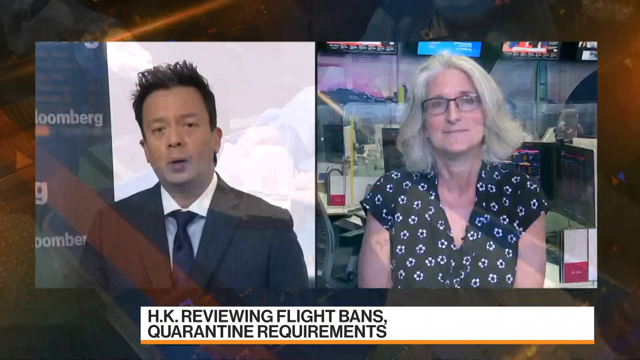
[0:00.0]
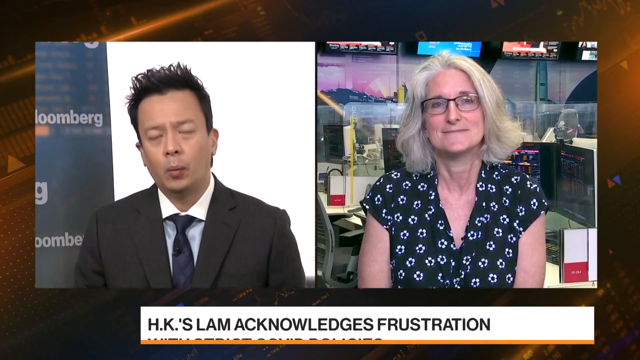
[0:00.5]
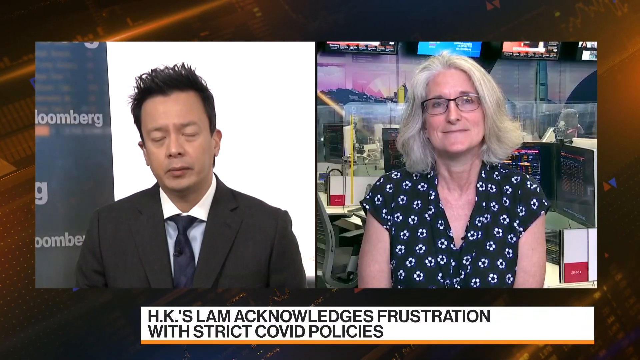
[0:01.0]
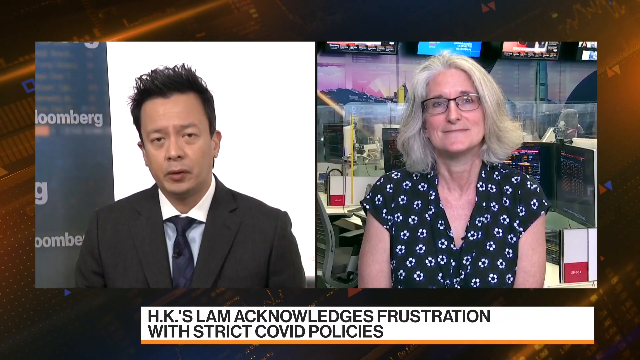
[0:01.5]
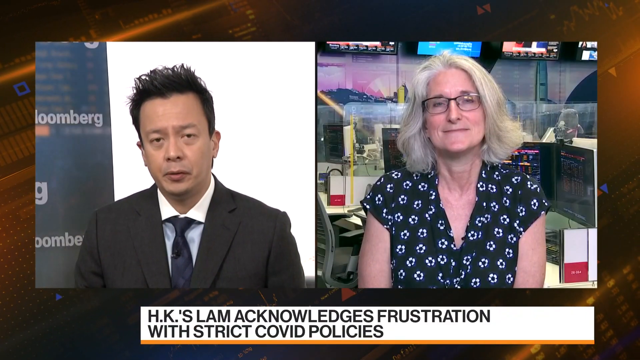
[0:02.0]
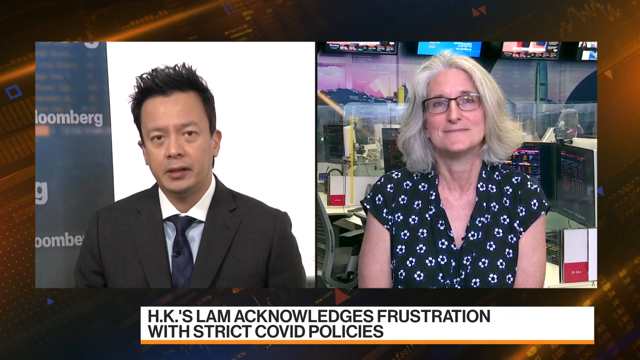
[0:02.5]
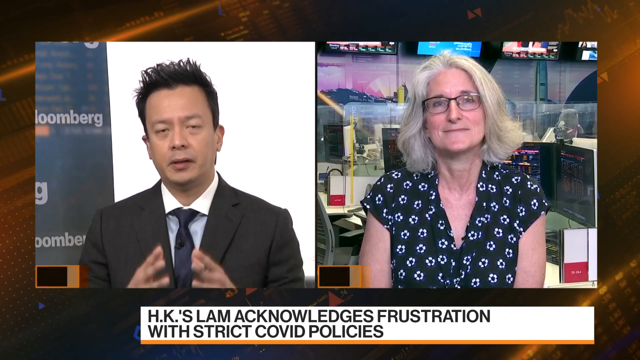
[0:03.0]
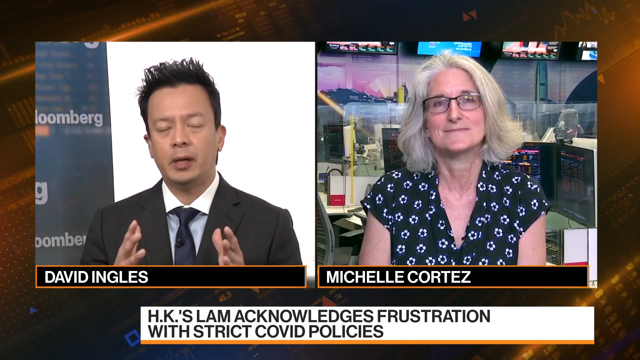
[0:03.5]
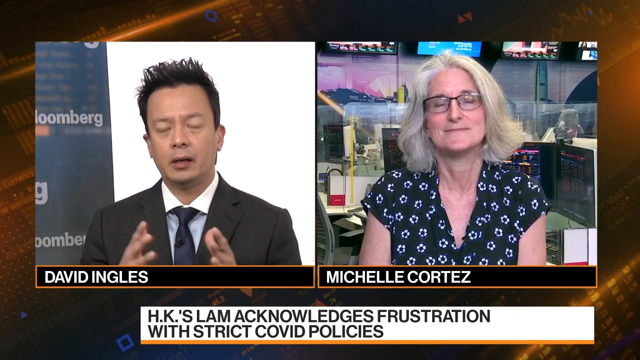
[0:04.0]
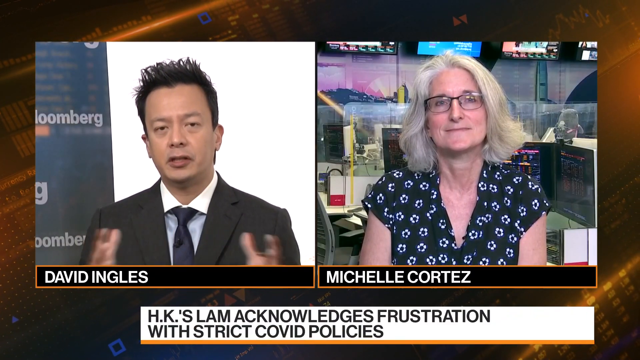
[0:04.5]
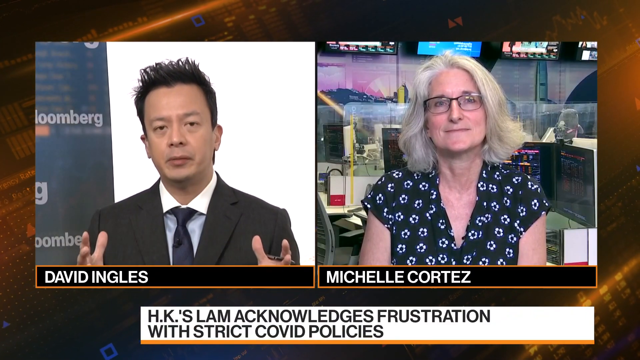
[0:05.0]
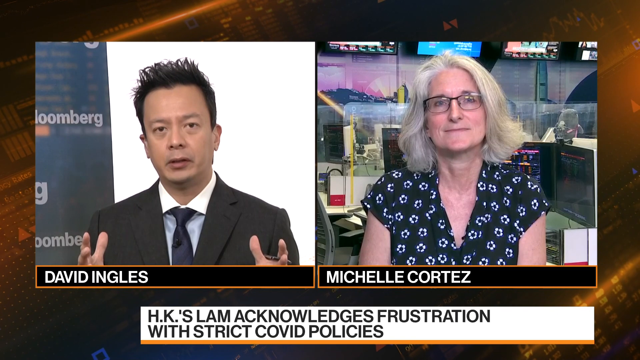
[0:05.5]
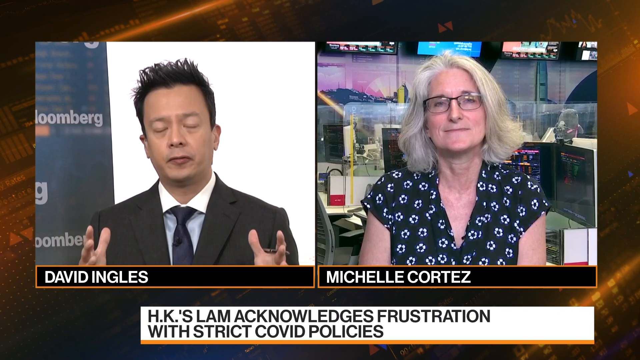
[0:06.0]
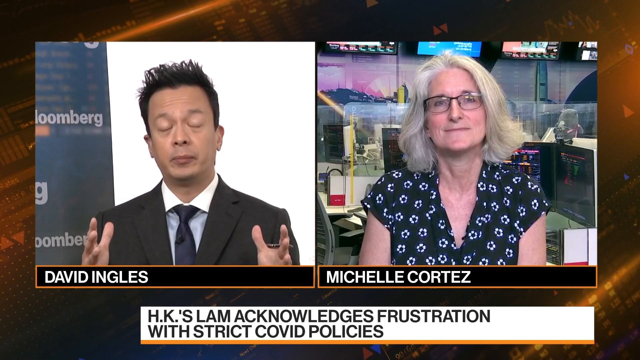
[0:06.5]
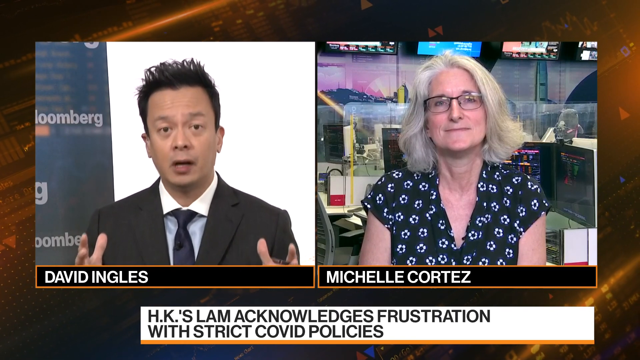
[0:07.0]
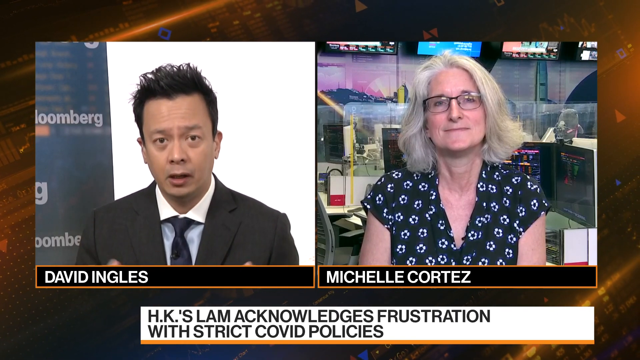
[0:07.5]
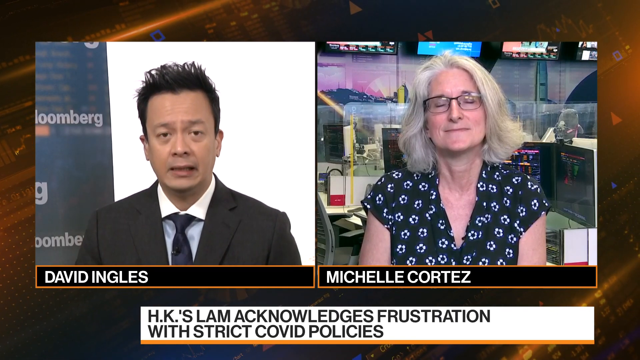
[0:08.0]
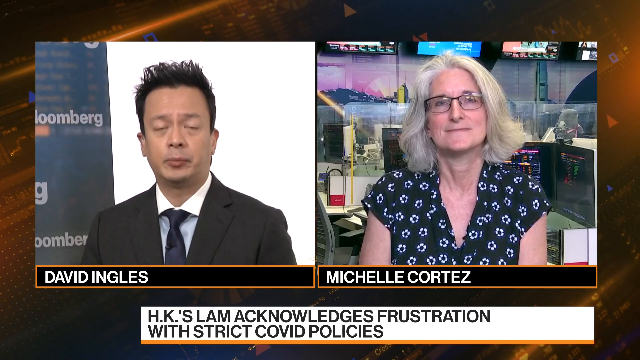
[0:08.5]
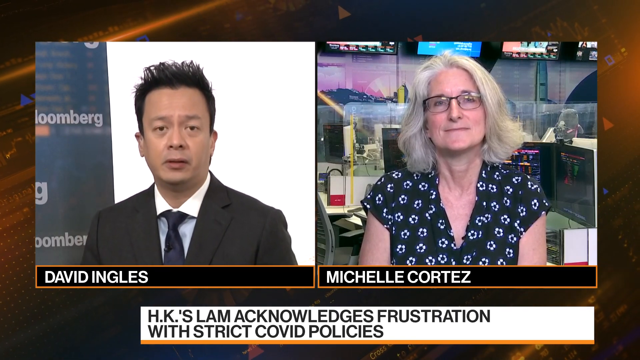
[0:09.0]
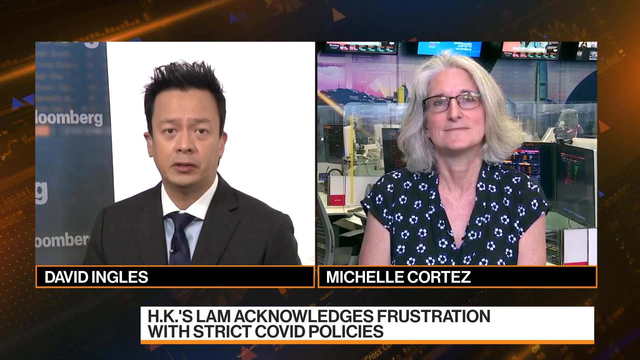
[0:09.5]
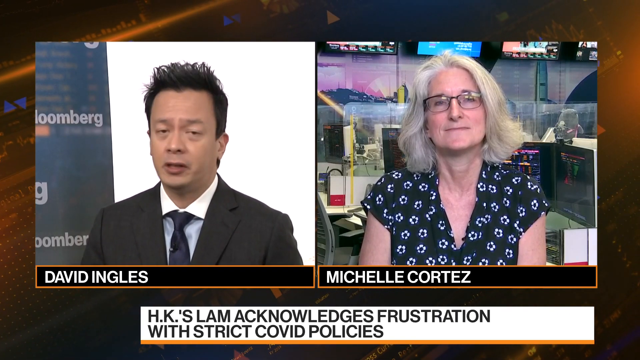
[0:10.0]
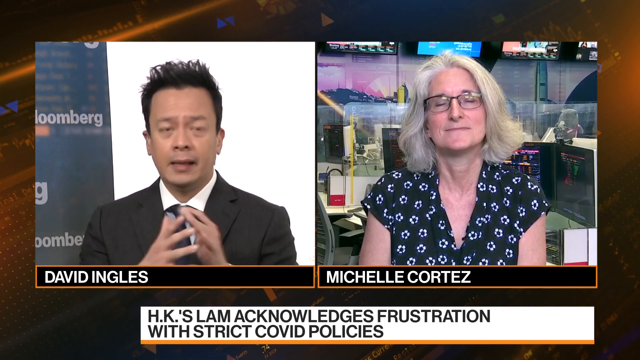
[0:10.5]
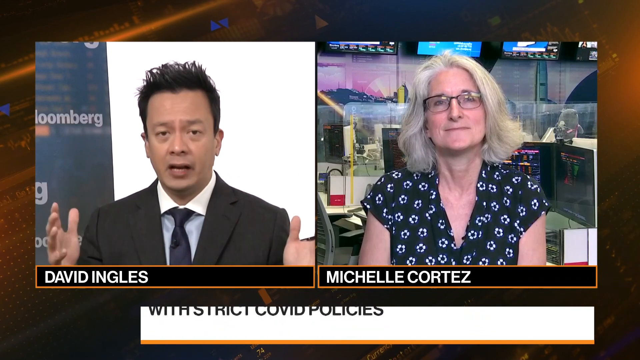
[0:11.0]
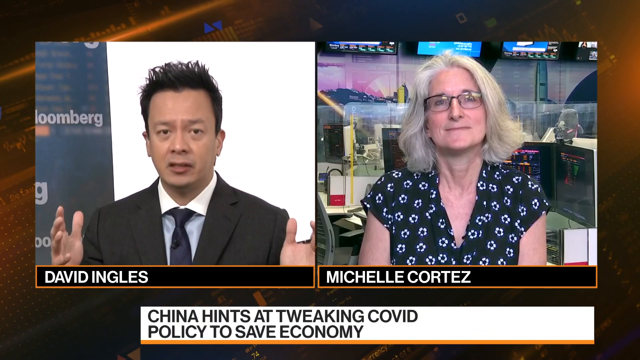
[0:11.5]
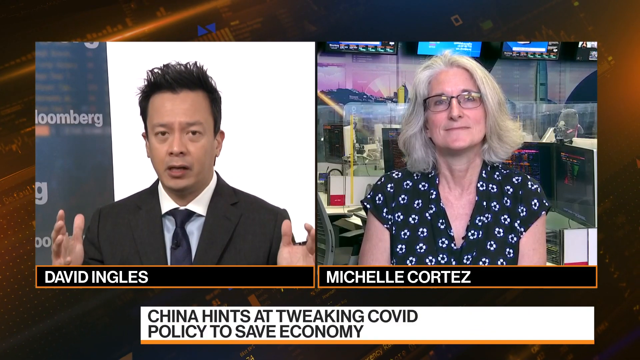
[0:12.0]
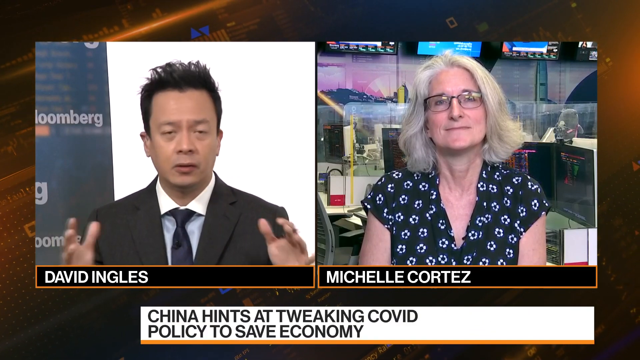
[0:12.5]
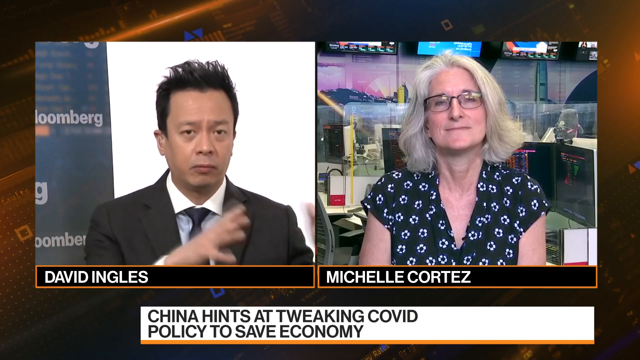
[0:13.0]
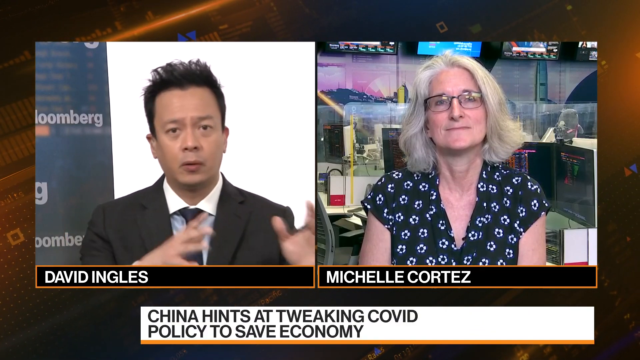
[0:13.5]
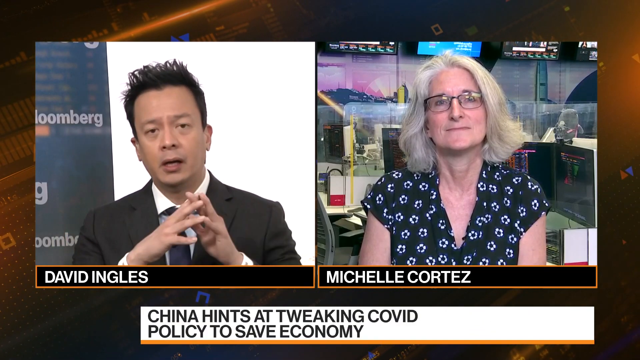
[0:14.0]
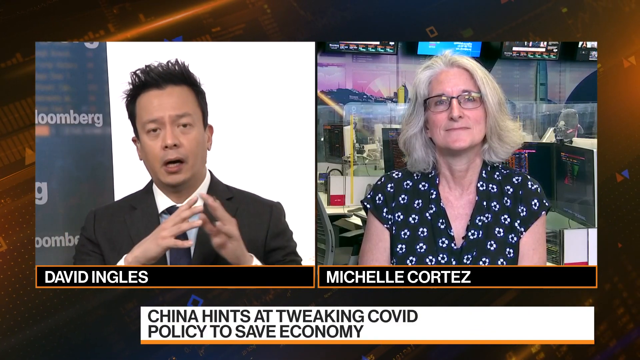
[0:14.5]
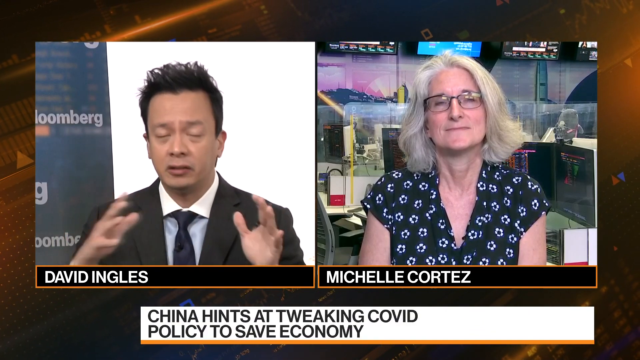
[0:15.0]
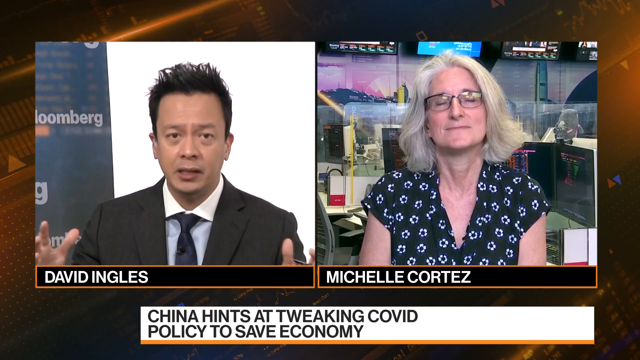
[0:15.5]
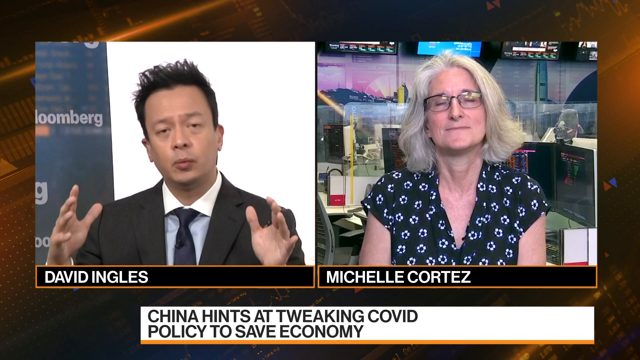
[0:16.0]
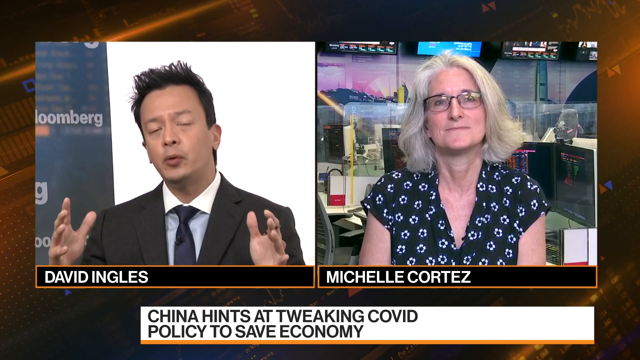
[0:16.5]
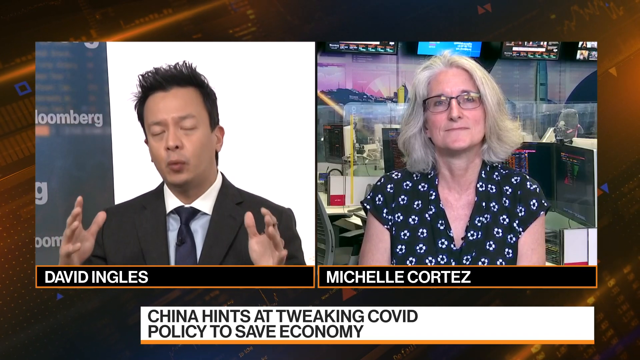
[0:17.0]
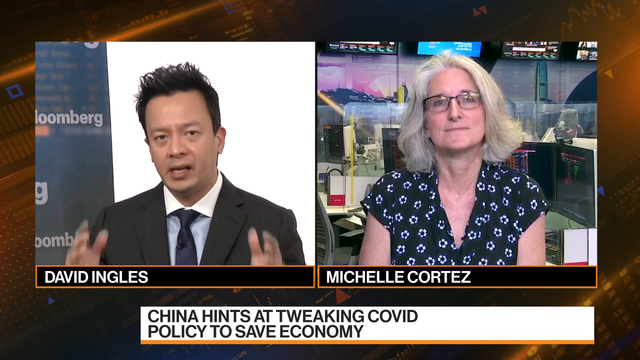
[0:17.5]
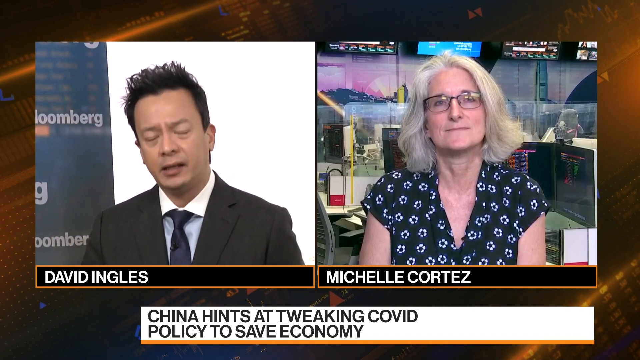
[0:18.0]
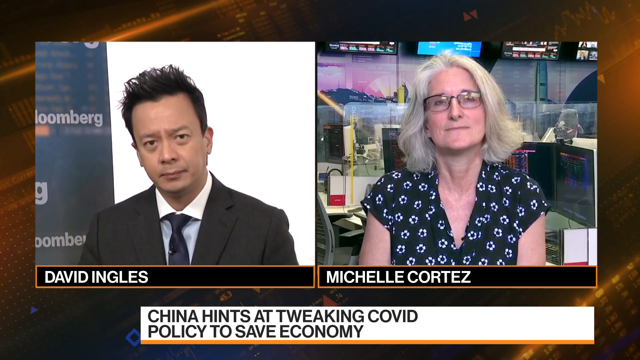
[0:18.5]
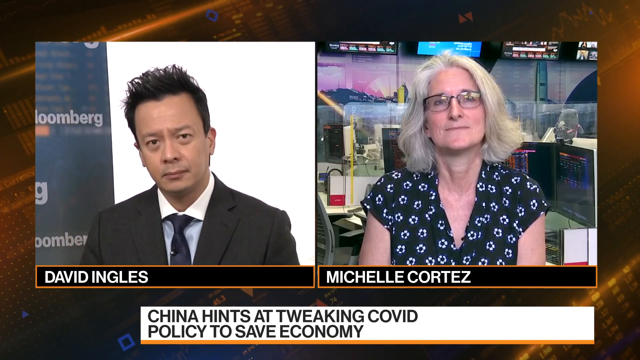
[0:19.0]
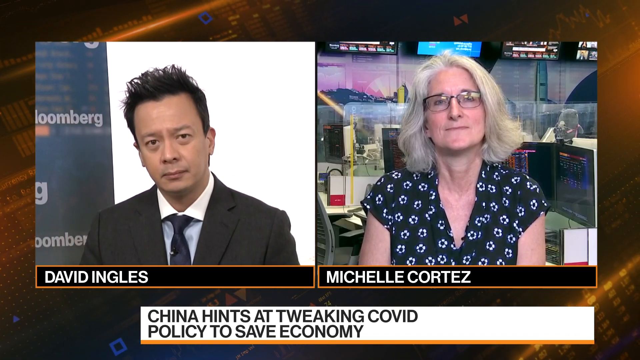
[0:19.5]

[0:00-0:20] A portion of a news program appears on a split screen. On the left is a news host named David Ingalls; on the wall behind him, text mentions Bloomberg. On the right is a woman named Michelle Cortez; the background behind her looks like she is sitting in a newsroom, but nothing on screen indicates where she works or what her expertise is. A banner at the bottom of the screen reads "HK's LAM acknowledges frustration with strict COVID policies." The banner then changes to read "China hints at tweaking COVID policy to save economy." David Ingalls speaks to Michelle Cortez while she listens intently, and only at the very end does she start to speak.